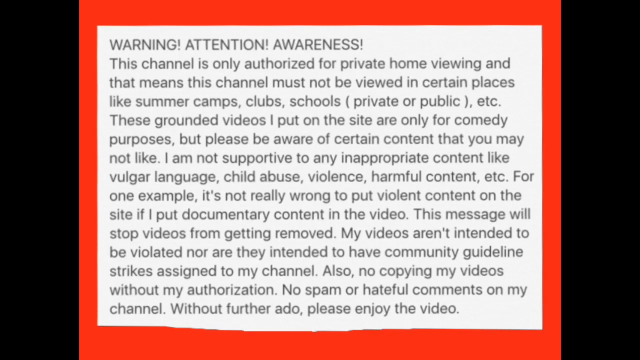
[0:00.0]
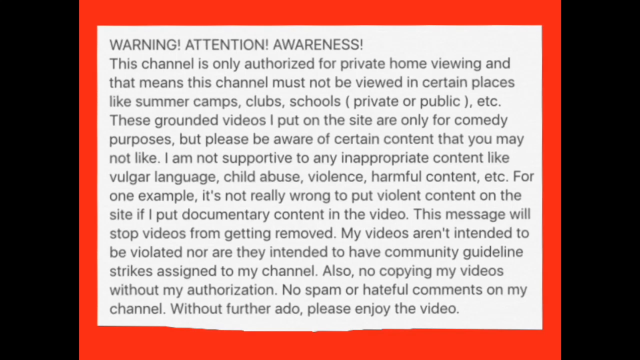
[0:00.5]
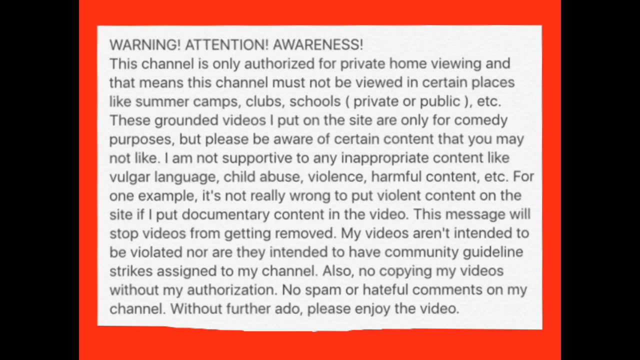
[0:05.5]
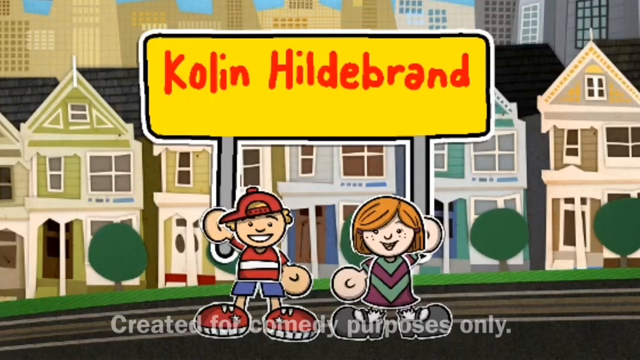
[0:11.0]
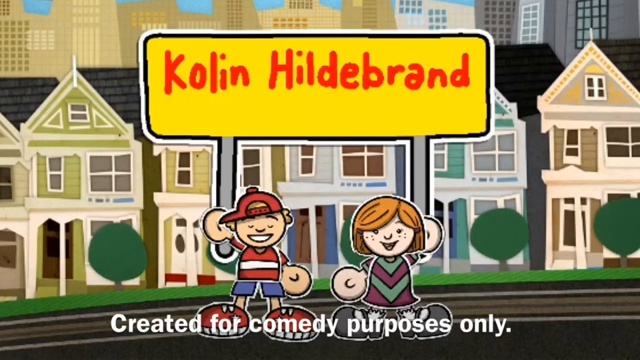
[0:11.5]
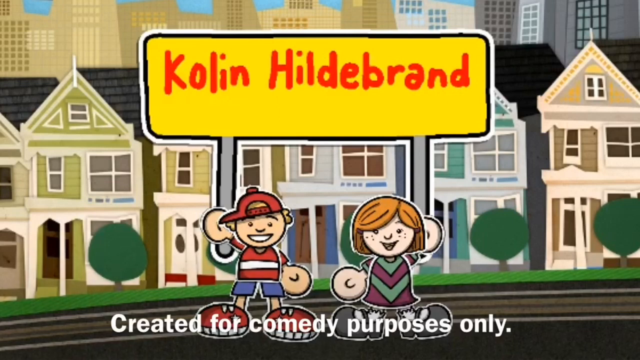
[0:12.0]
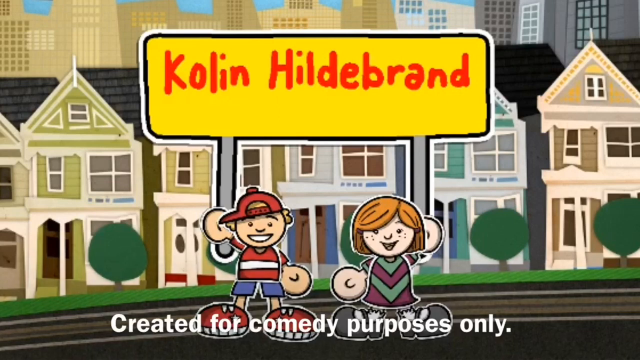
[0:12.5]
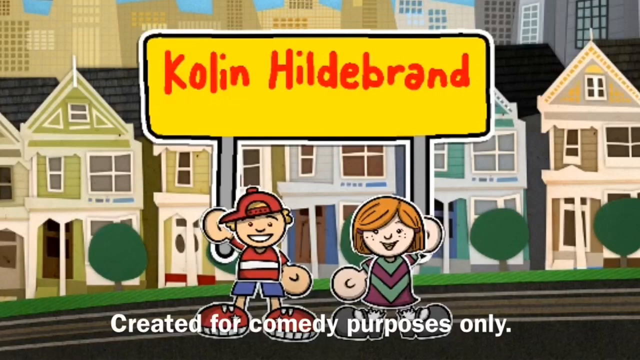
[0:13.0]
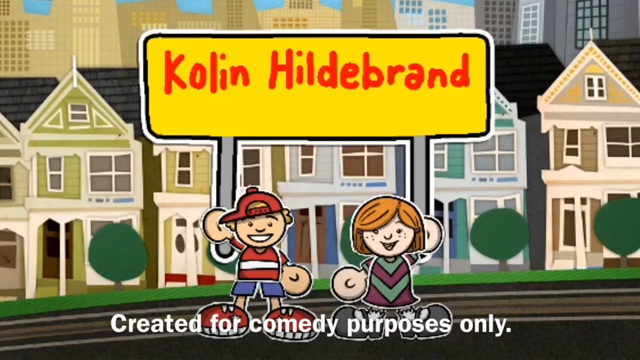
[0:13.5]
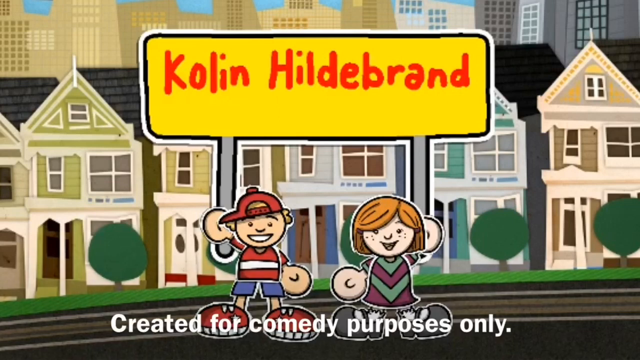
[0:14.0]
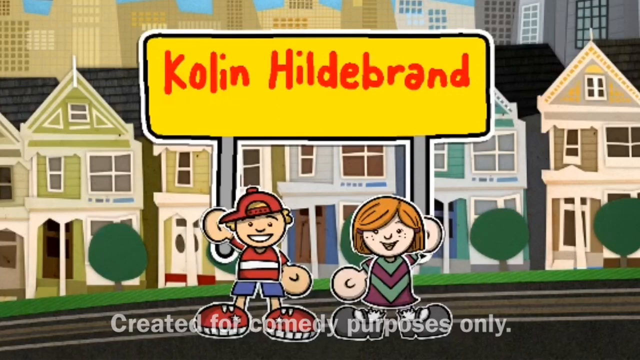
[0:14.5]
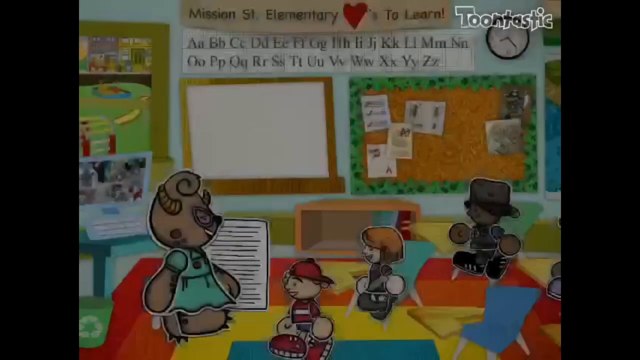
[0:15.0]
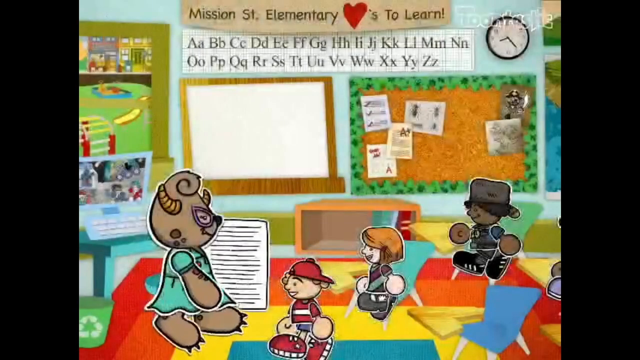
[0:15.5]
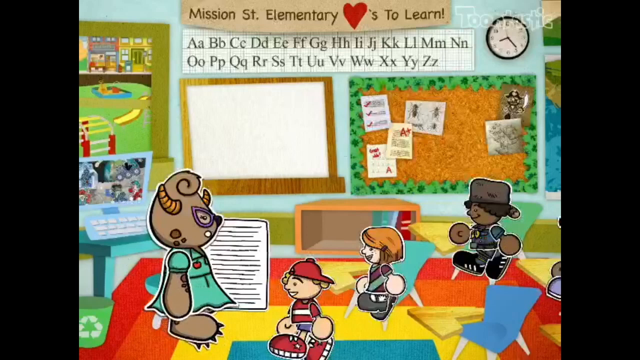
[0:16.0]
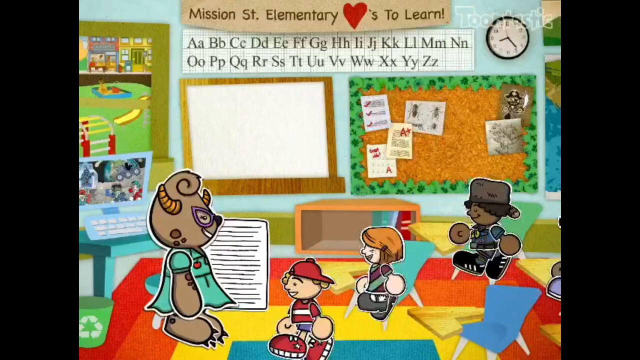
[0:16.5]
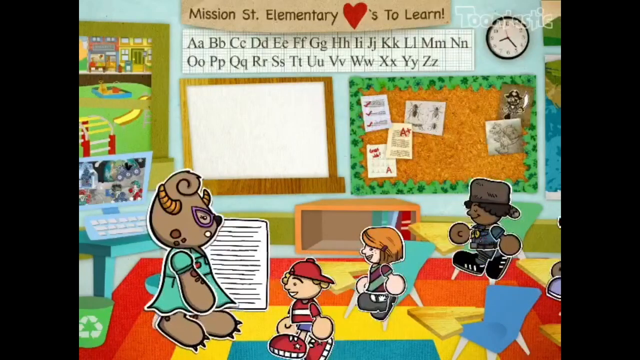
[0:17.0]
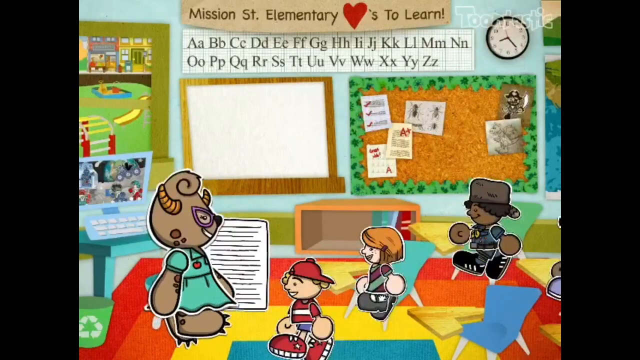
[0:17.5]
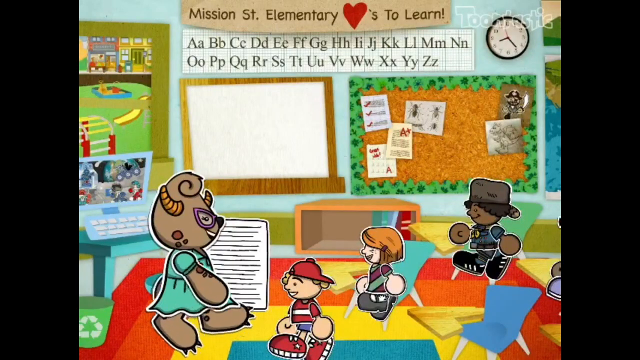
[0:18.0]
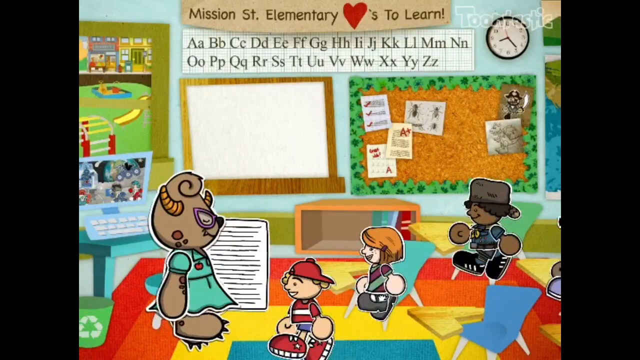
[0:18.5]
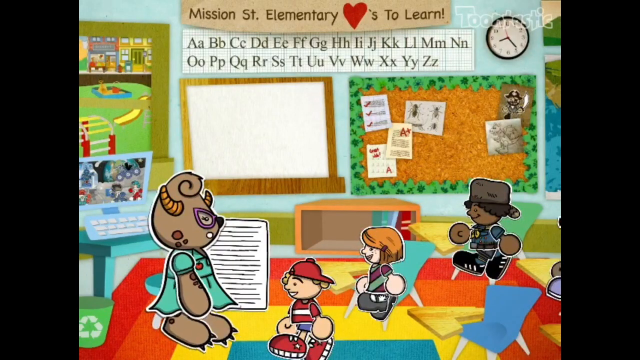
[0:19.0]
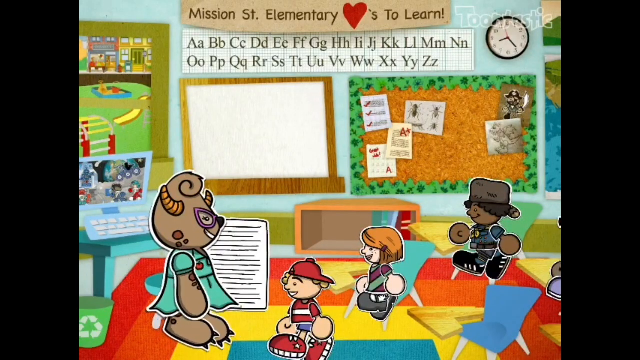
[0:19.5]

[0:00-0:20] The video opens with white text that reads "warning attention awareness this channel is only authorized for private home viewing and that means that this channel must not be viewed in certain places like summer camps clubs schools private or public etc" and continues with further notices, including "please be aware of certain content that you may not like" and, at the end, "without further ado please enjoy the video". A transition follows, showing two individuals with the title "Colin Hildebrand" in the center.